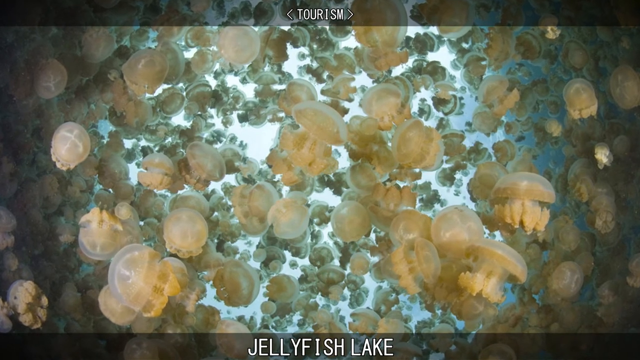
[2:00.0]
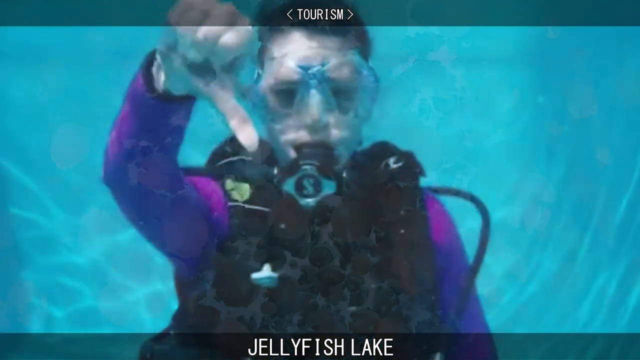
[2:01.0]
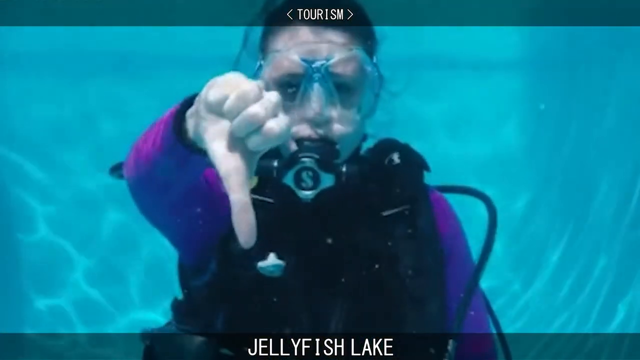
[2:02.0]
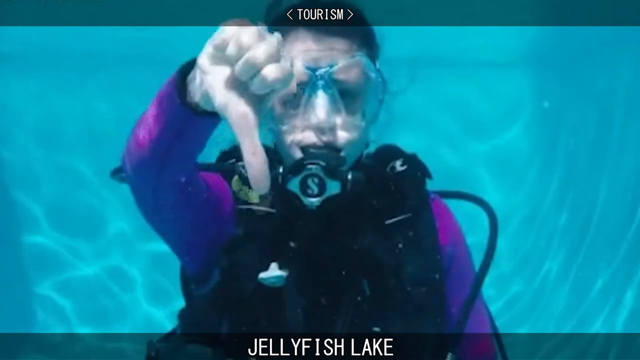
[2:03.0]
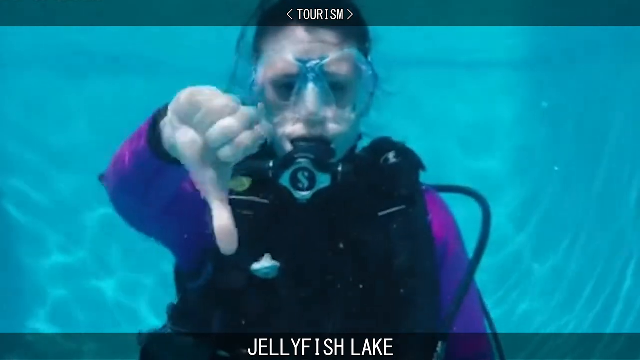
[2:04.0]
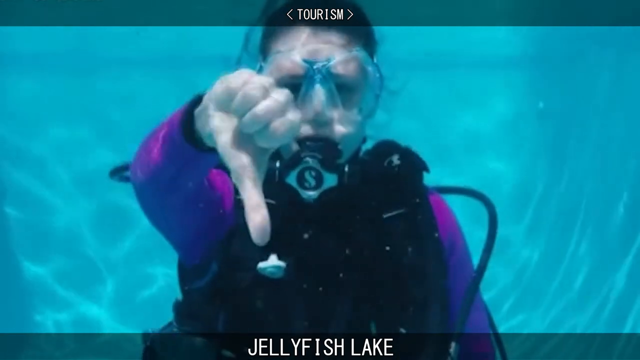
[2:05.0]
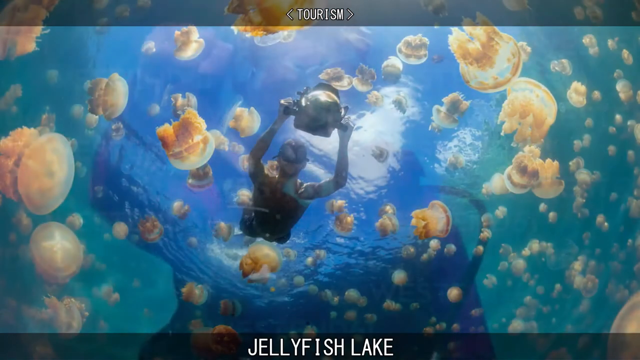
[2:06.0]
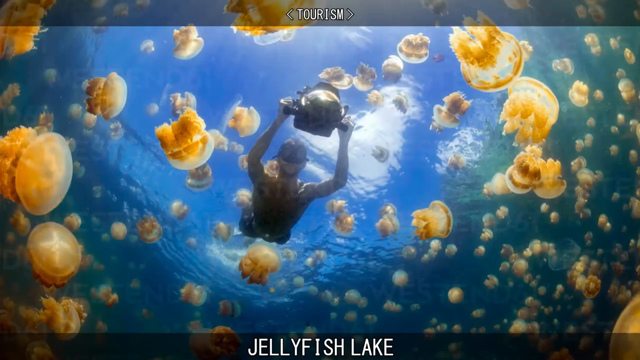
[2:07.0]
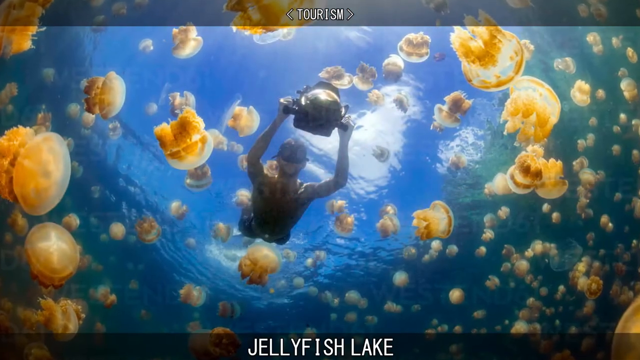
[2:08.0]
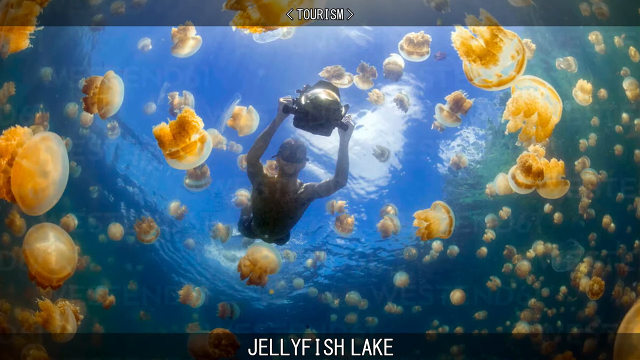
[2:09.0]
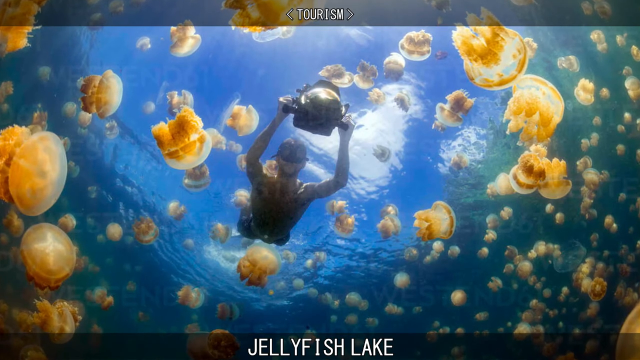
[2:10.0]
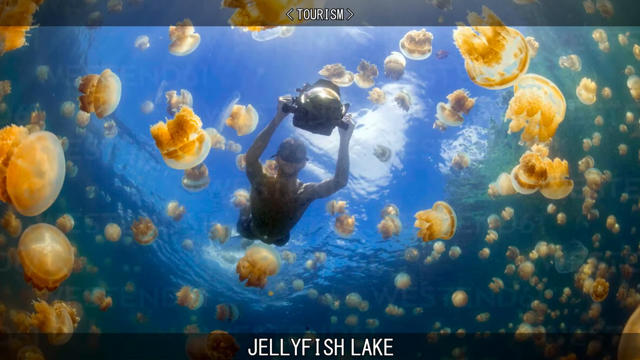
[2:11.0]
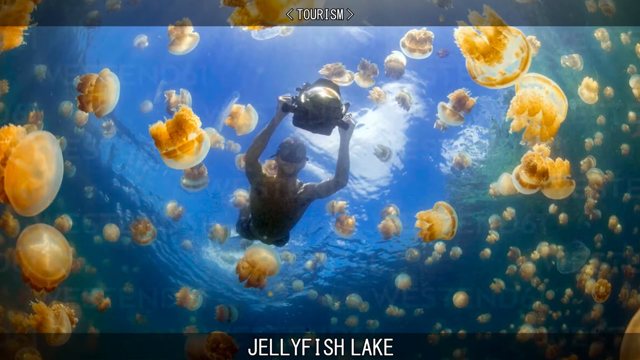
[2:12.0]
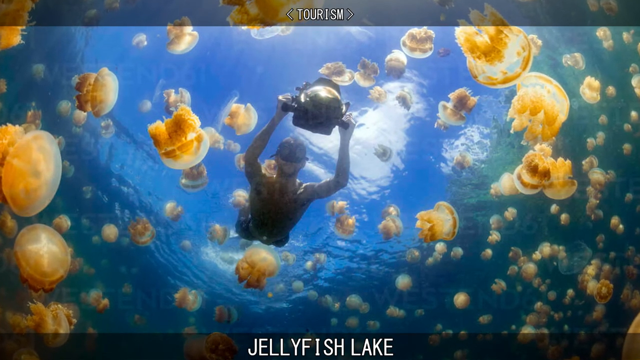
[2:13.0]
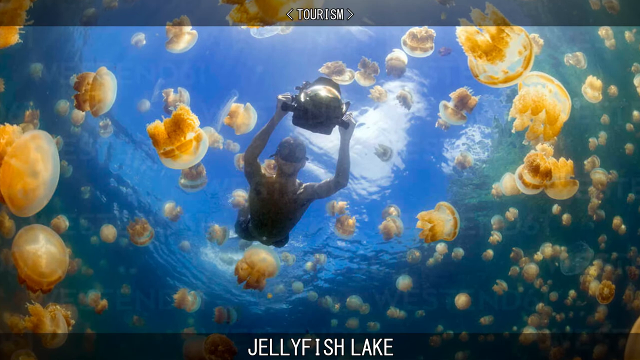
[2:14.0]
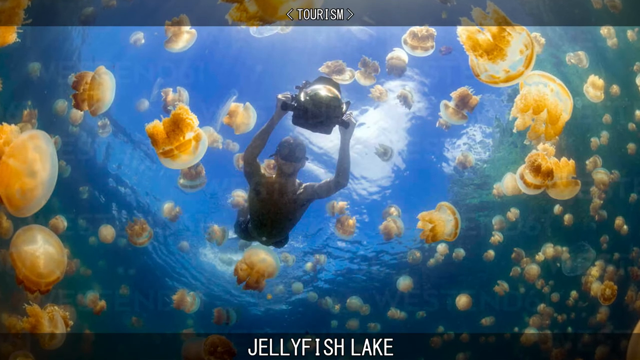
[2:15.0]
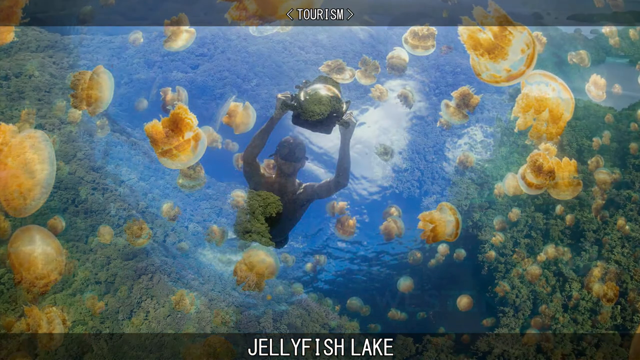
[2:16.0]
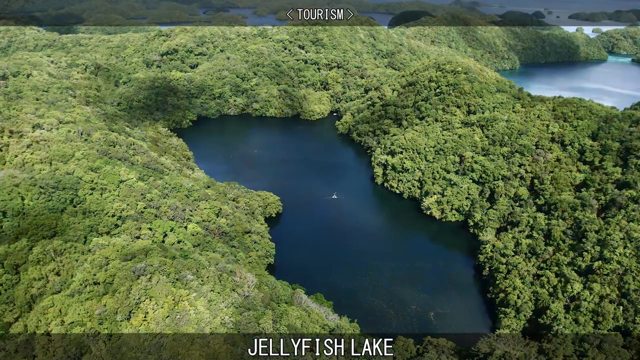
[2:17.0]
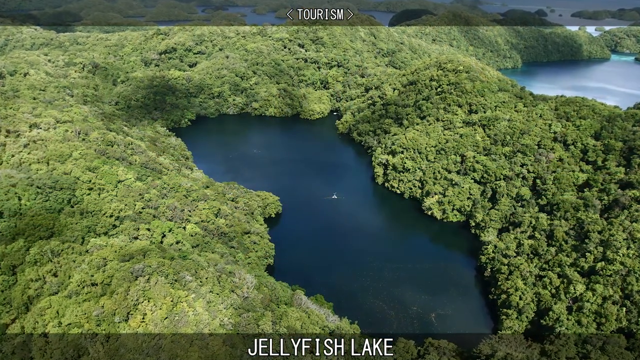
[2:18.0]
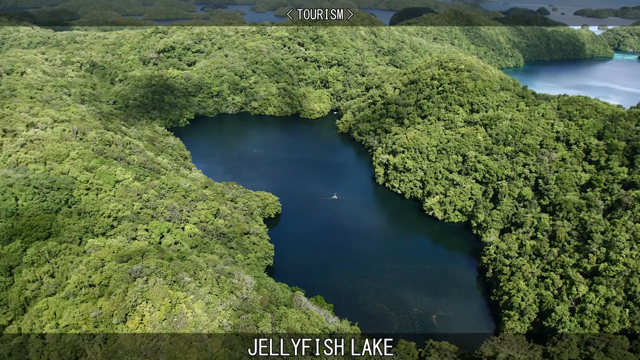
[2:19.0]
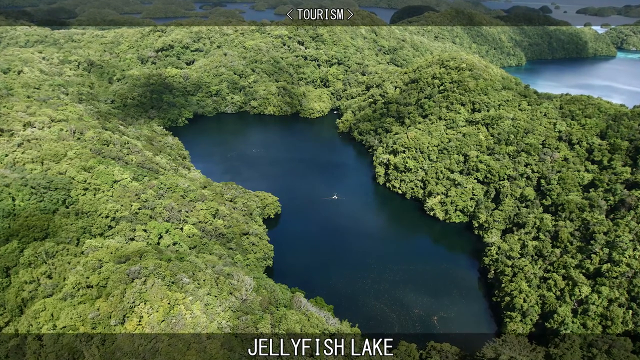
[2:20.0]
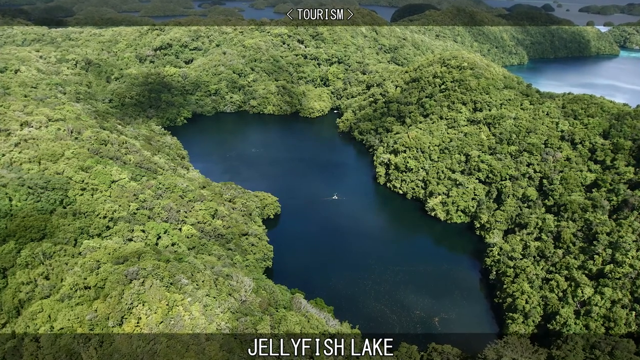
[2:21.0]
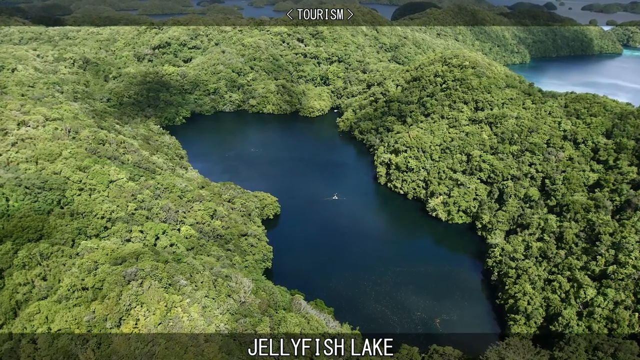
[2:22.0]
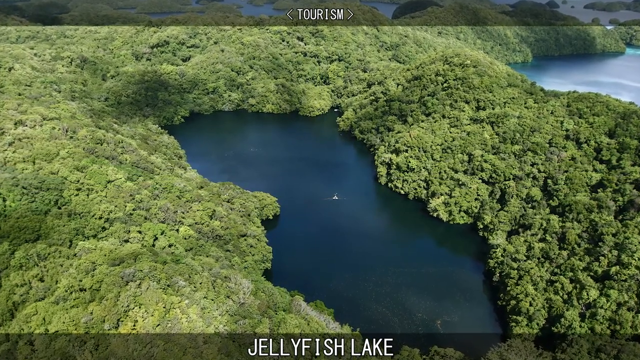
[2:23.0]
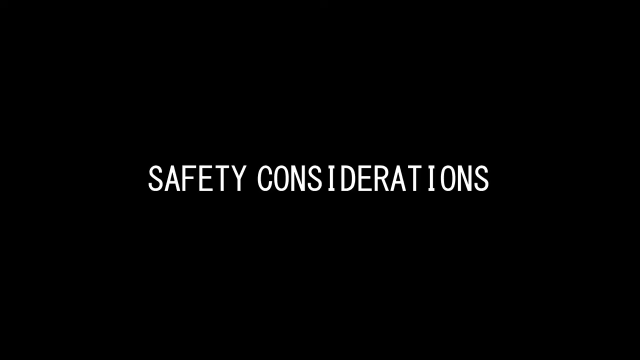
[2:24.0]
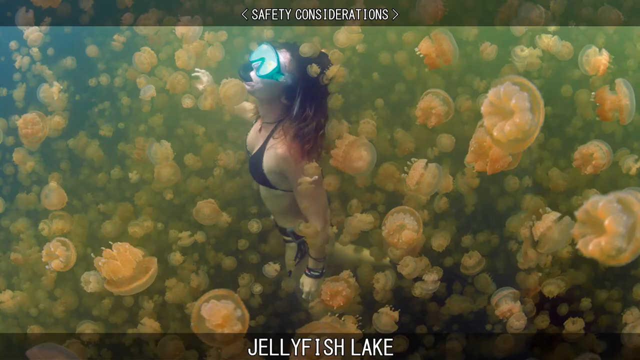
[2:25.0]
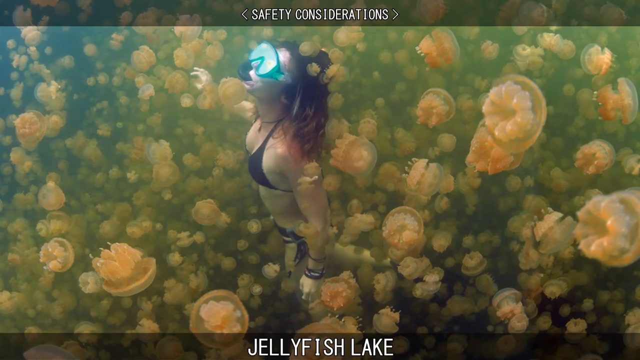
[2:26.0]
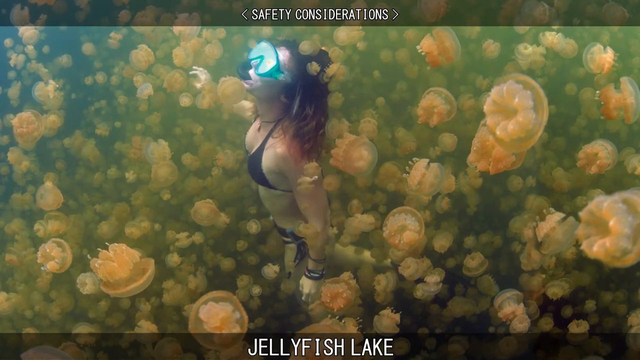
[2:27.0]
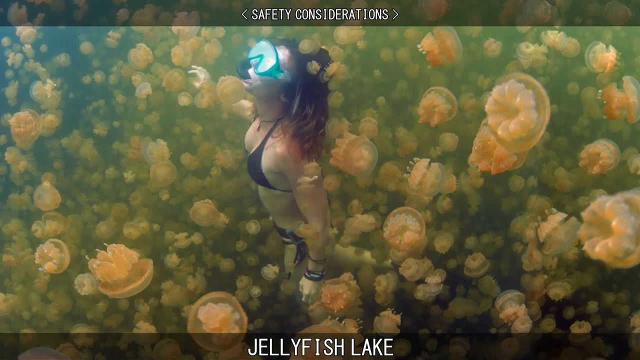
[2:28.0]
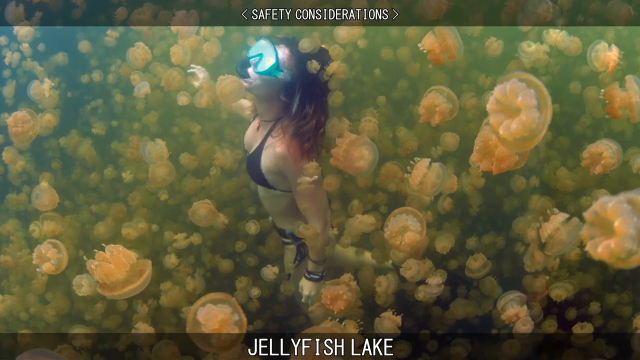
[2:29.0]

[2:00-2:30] The video turns to tourism at Jellyfish Lake. A scuba diver in a purple wetsuit, with scuba gear on, looks at the camera and appears to give the thumbs-down sign repeatedly. Then the lake is shown, with what looks like a diver going down into it. The lake looks kind of dark, with many jellyfish that have little hairy nubbies on the end. Though the water is dark, some blue is visible, seemingly from the sky, and clouds appear to be visible above. The jellyfish are almost a yellowish-orange color with some translucency. The diver goes into the water, and the jellyfish seem pretty unbothered. Next, a drone-type view shows the lake from above, surrounded by green forest that almost looks like broccoli tops. The video then moves on to safety rules to consider before going into a lake full of jellyfish.